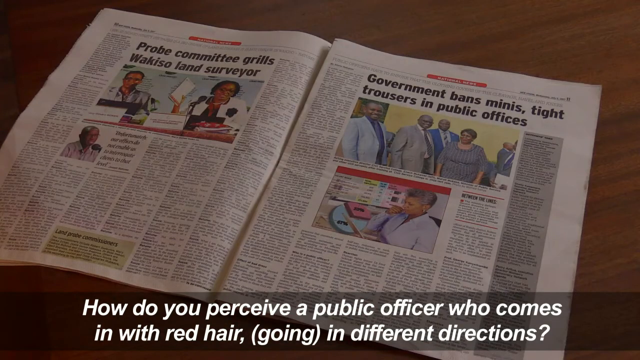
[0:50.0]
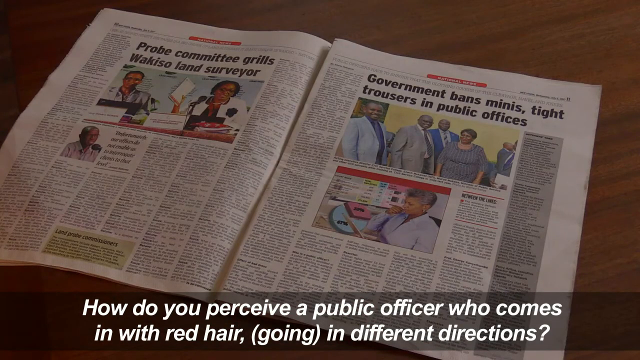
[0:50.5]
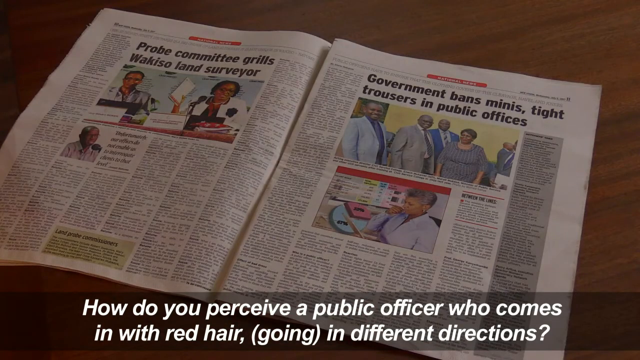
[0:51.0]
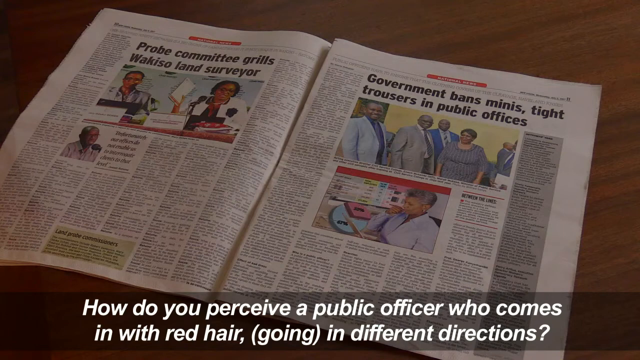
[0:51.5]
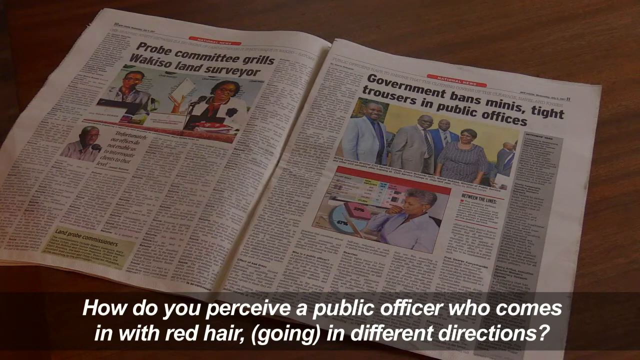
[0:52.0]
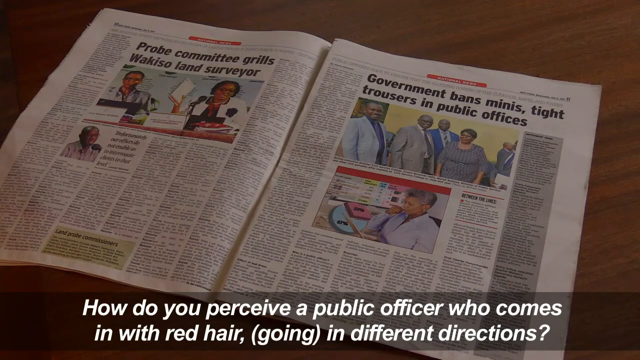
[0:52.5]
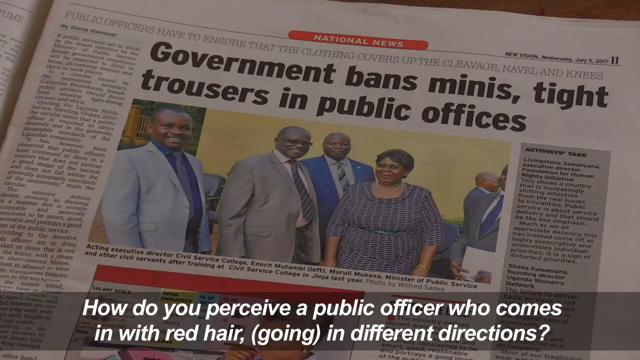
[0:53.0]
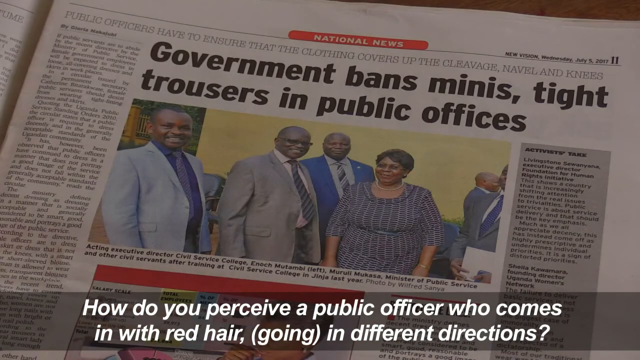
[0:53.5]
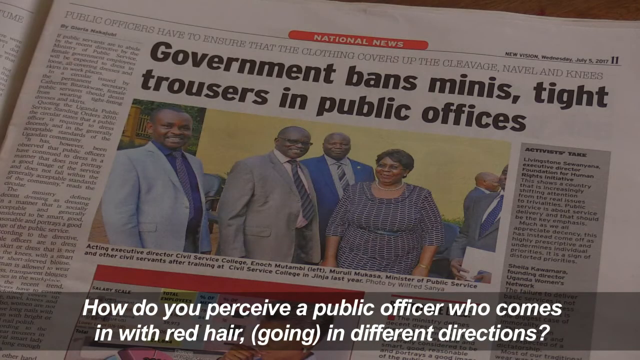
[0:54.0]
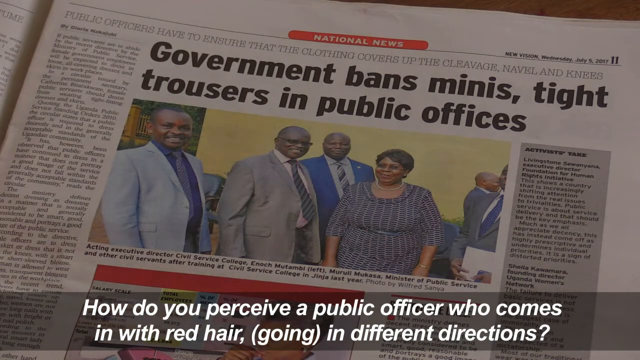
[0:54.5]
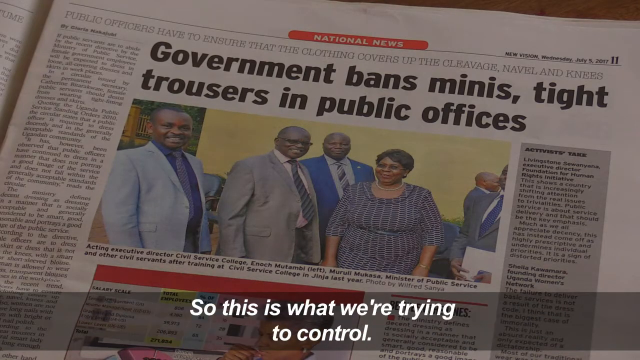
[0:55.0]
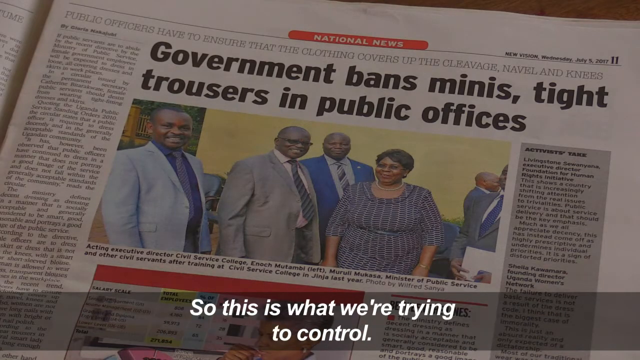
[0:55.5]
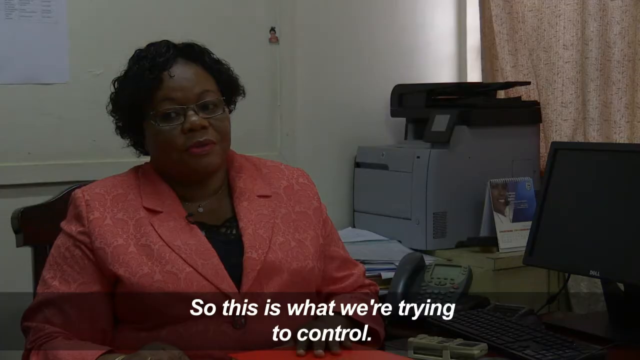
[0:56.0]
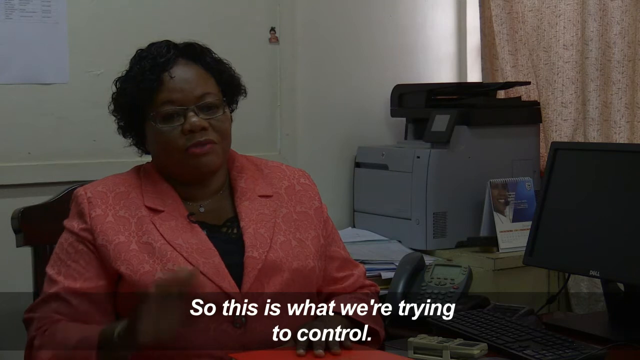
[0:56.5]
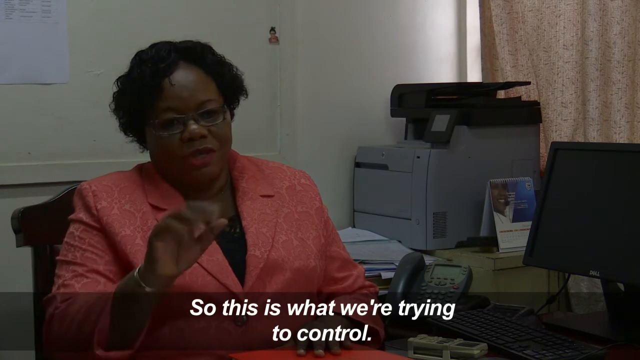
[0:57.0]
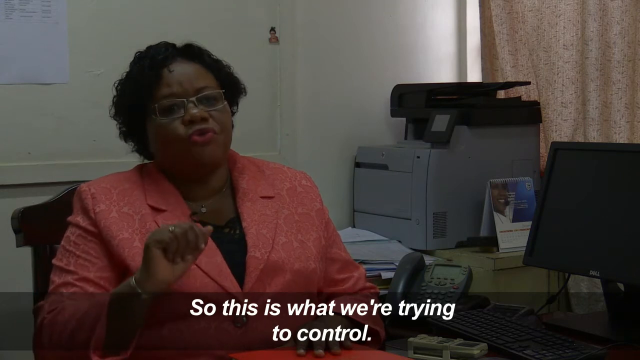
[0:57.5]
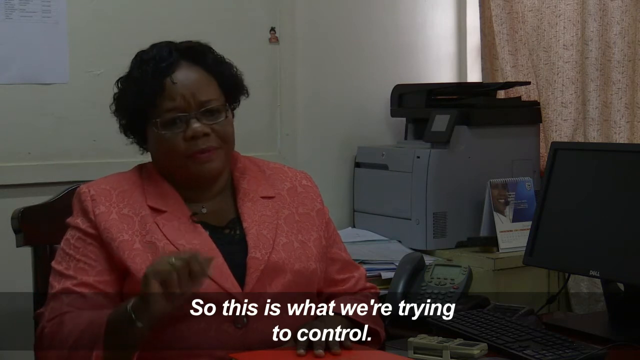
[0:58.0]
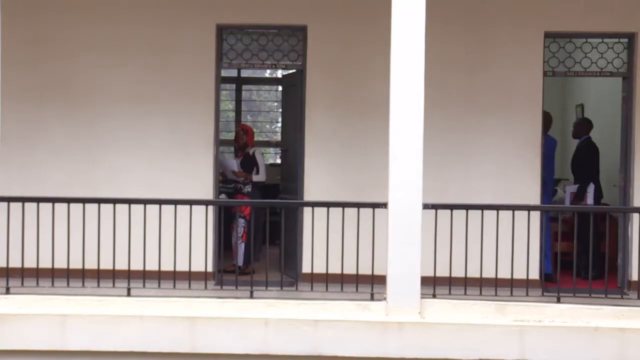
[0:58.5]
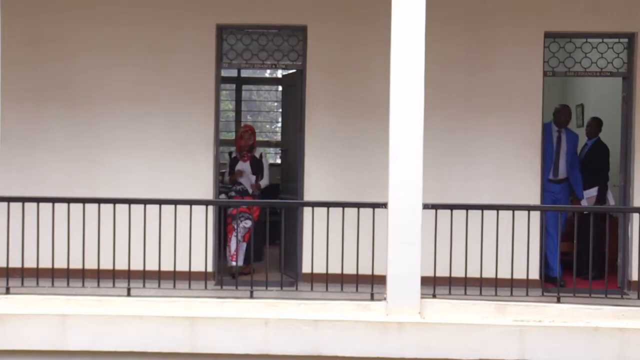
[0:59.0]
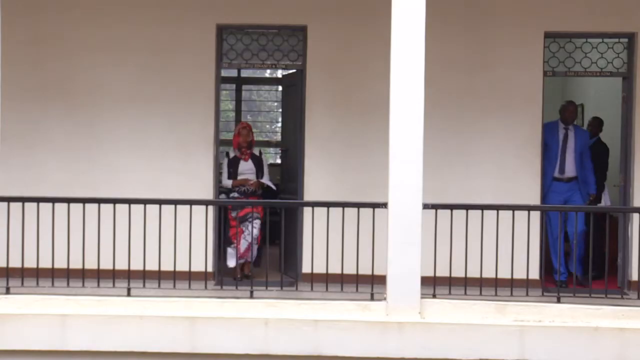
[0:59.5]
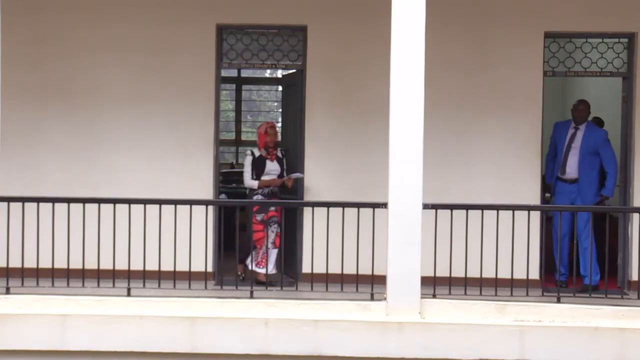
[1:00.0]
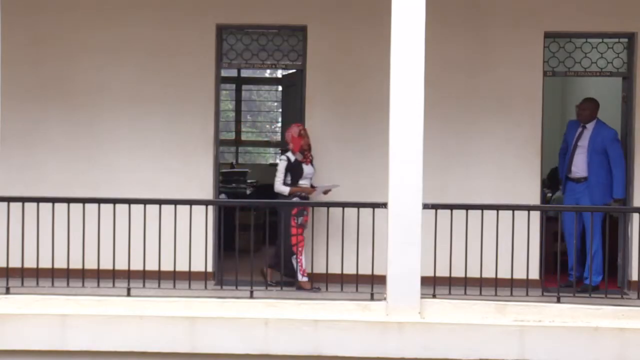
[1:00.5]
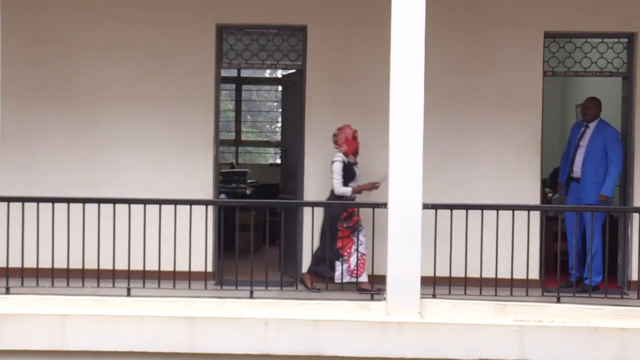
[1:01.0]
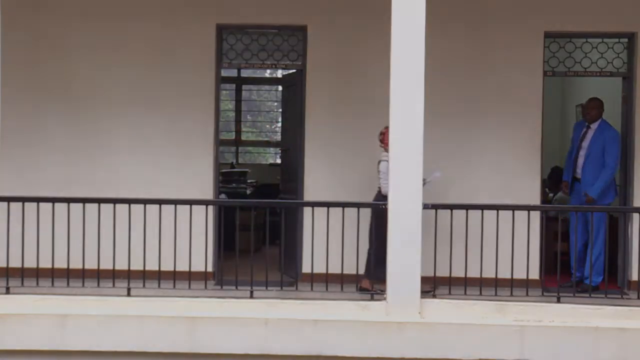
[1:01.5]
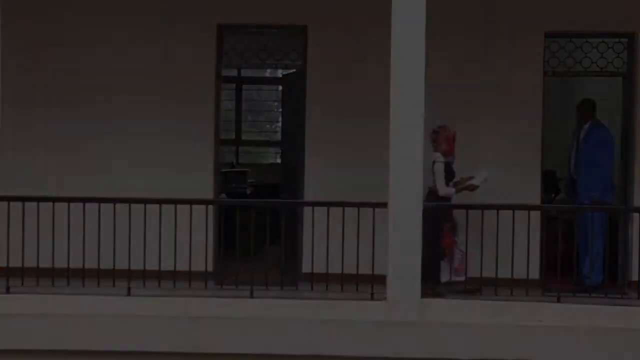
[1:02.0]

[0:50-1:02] A wide shot shows the newspaper open across the table. A different page is opened, with the headline "government bans, minis, tights, trousers in public offices" in the right-hand corner. On the left-hand side of the newspaper there are images of ten people. A close-up shows the article about the government banning minis, with six people visible in the photo. The woman raises her right hand and makes gestures. Then a woman exits what looks like an office building and walks toward a man at another office building, who waits by the door.